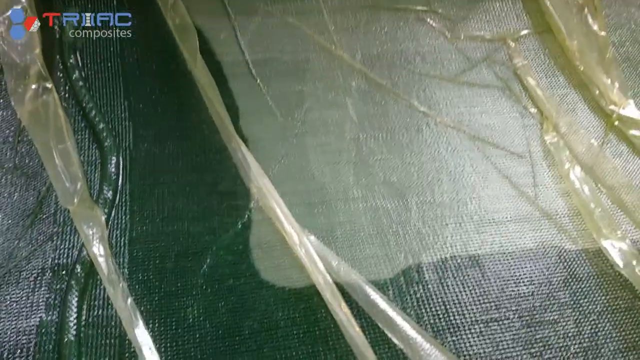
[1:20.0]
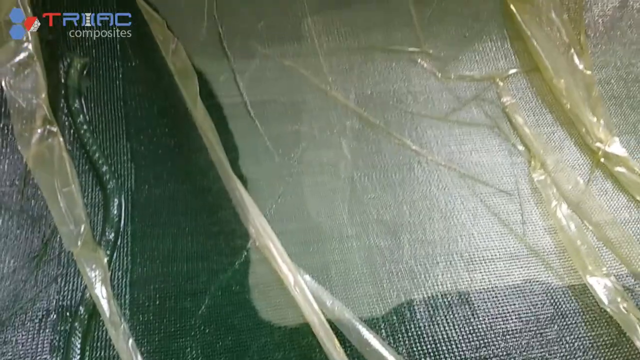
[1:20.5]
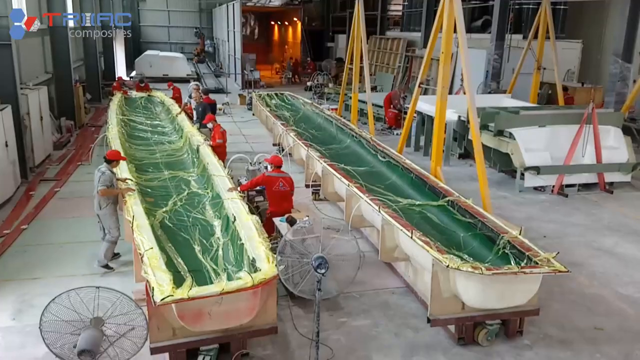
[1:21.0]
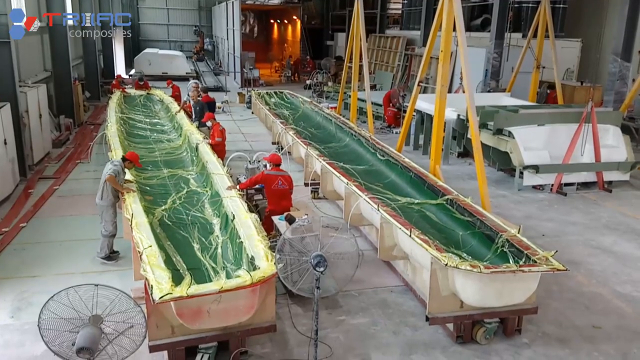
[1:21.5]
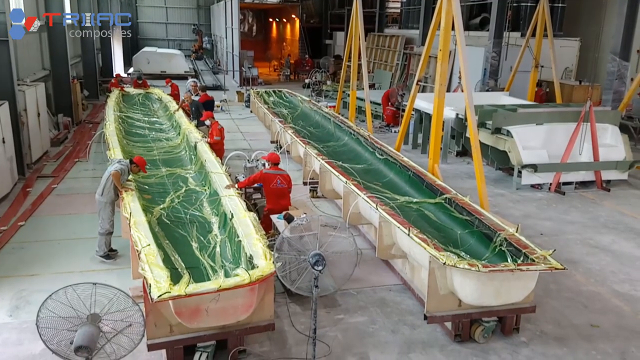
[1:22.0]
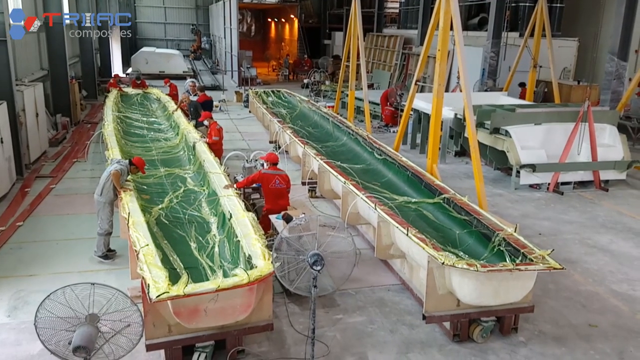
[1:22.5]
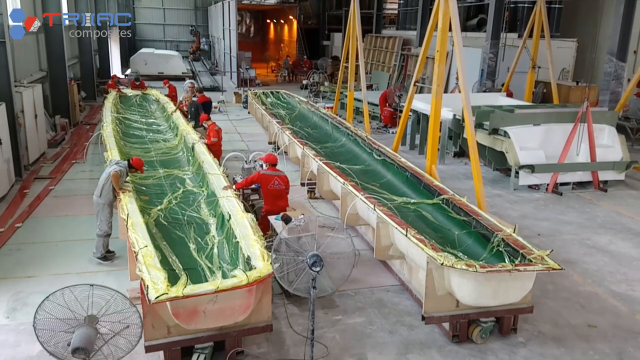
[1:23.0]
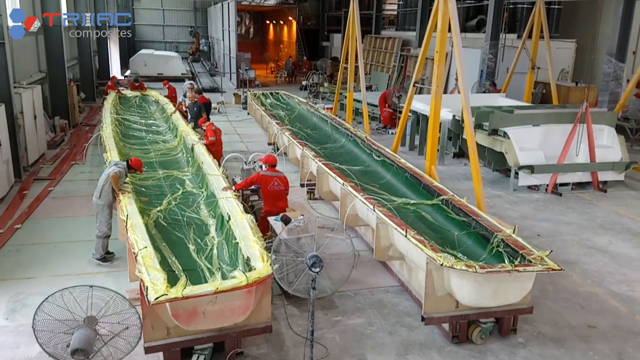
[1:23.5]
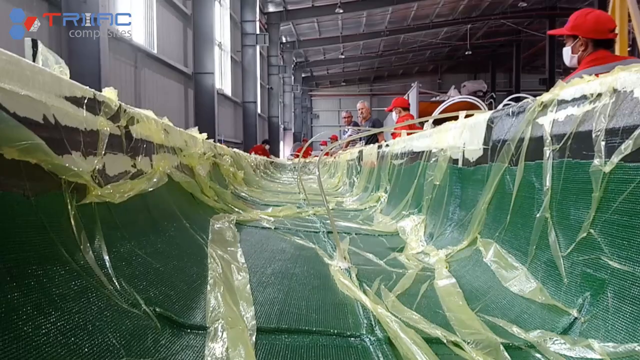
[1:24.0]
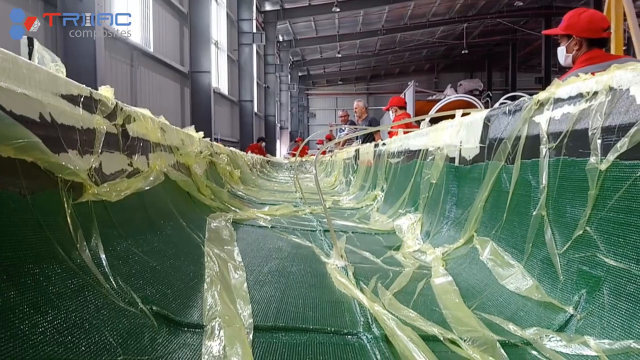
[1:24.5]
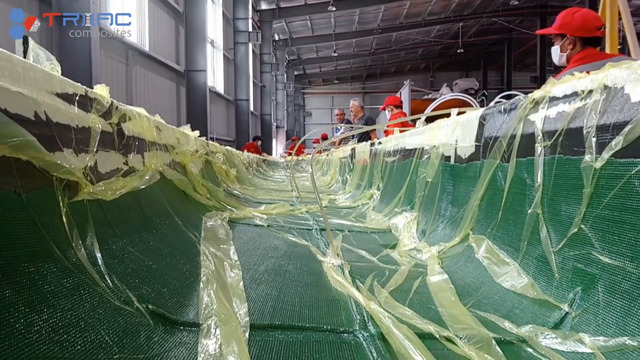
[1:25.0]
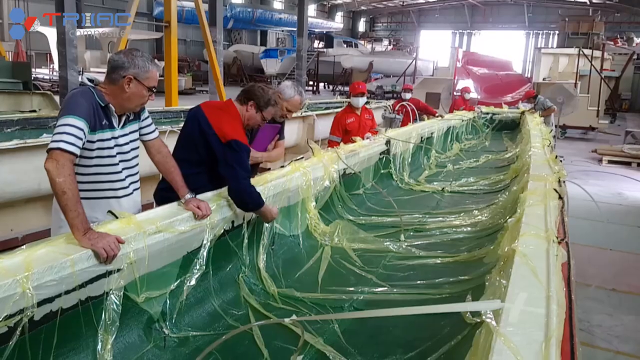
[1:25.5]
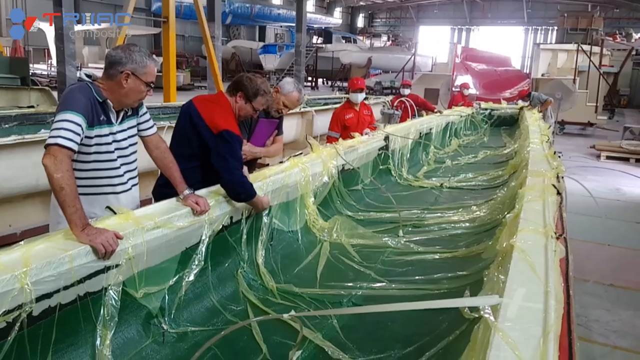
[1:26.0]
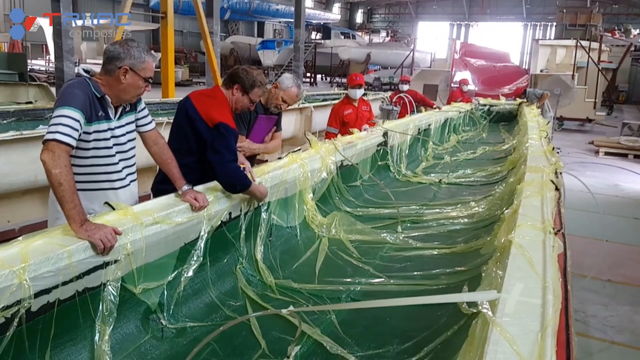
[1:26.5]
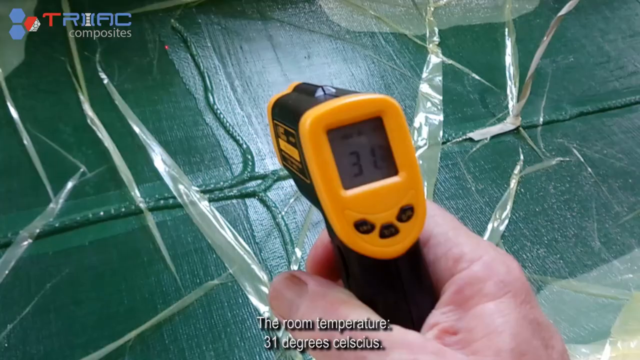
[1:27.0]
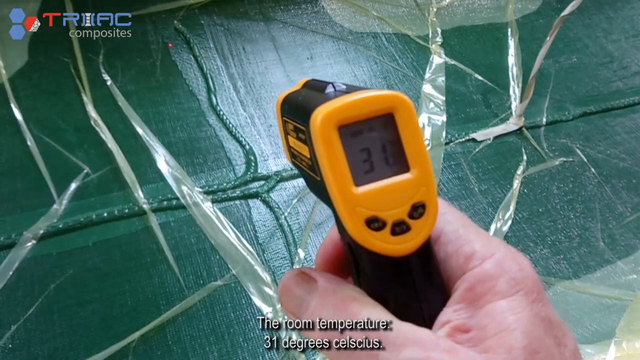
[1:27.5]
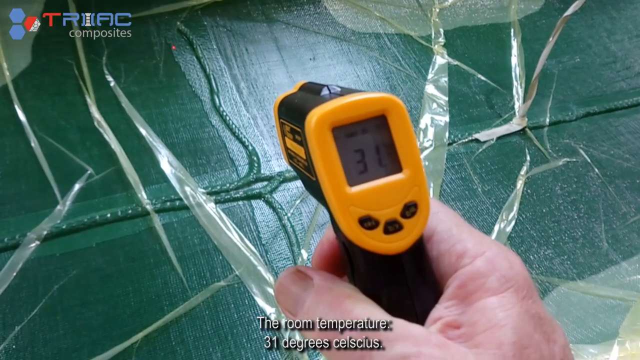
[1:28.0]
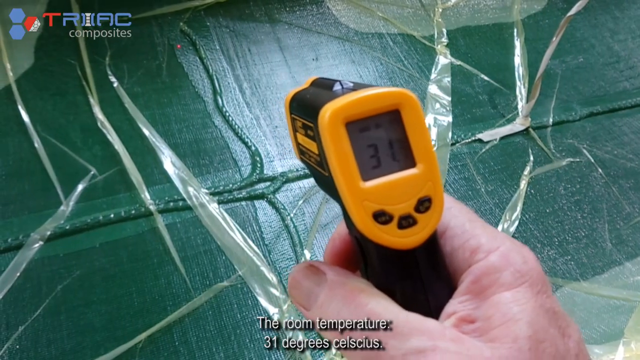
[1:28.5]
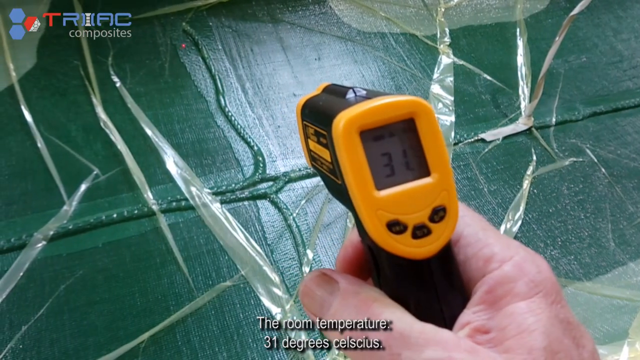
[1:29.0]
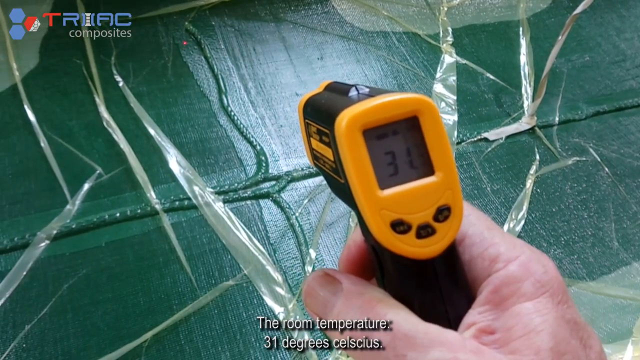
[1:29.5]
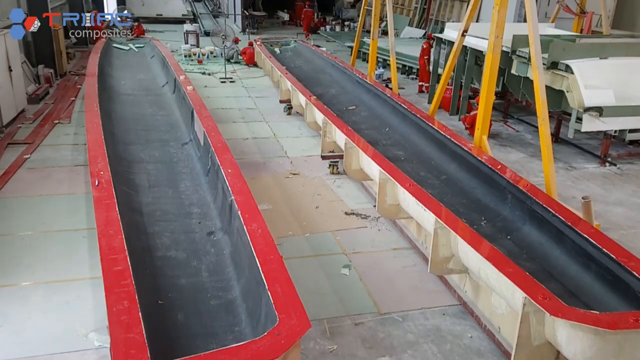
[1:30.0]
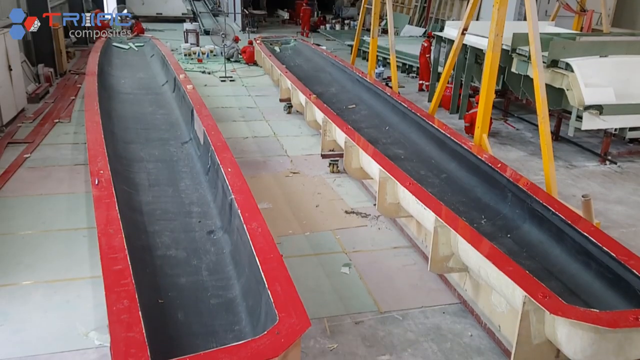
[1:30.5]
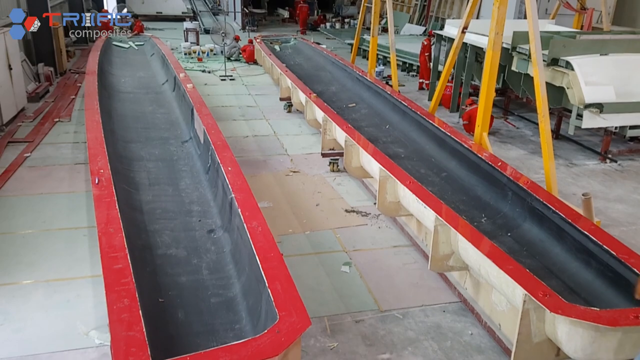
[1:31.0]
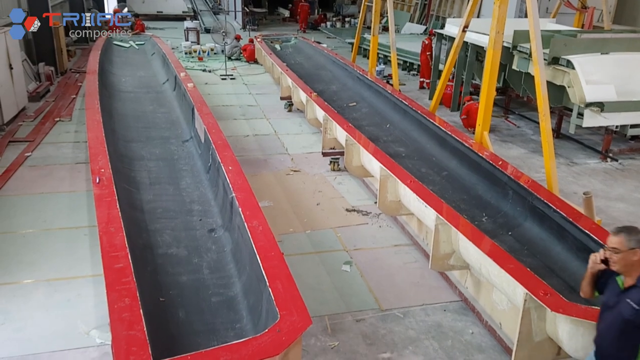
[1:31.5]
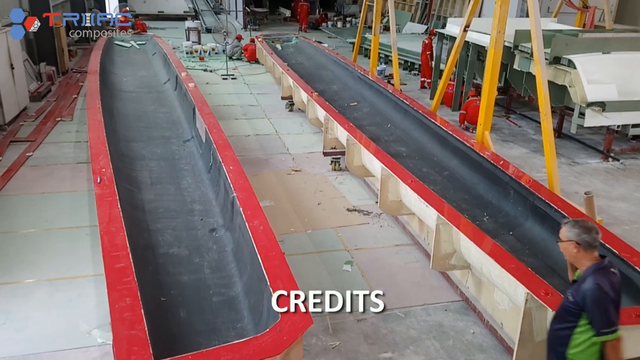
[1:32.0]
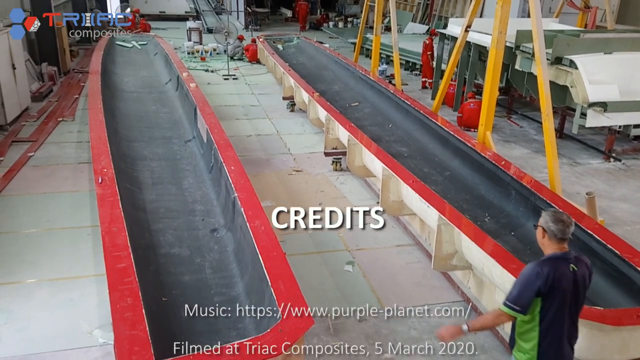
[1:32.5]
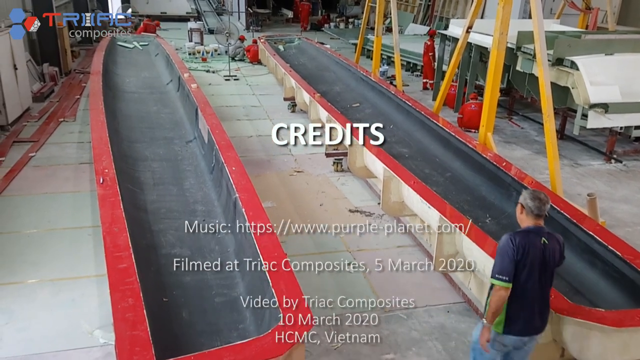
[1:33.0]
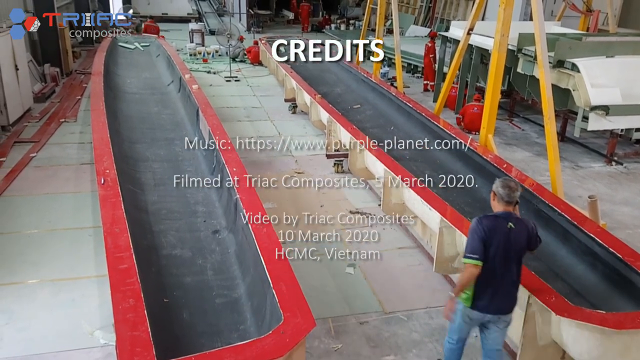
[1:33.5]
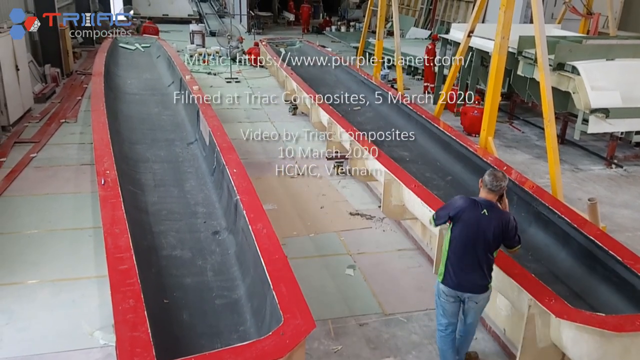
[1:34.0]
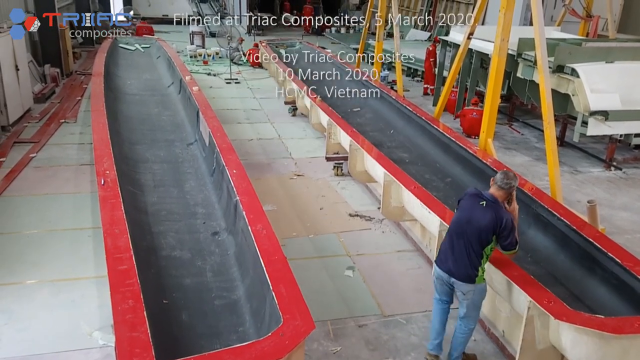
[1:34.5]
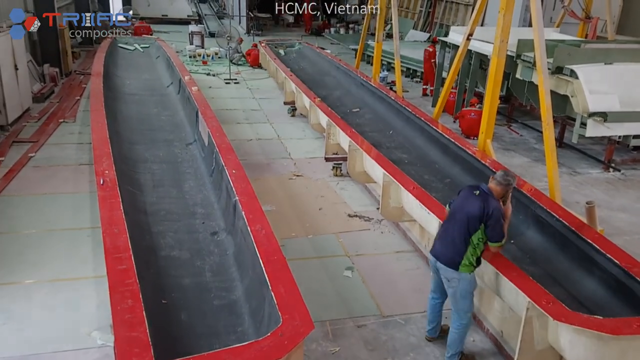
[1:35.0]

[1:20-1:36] The floats are shown already assembled, with resin covering their interior. The floats are covered in some sort of plastic and look almost done. Factory workers and some other people, who appear to be supervising or overseeing the production, are standing on one side of the float and look like they are inspecting the equipment, and somebody takes the room temperature. Then the two finished floats are shown with the plastic covering removed. A man walks between the two floats, seemingly on the phone, and then inspects the equipment. The credits then start rolling.